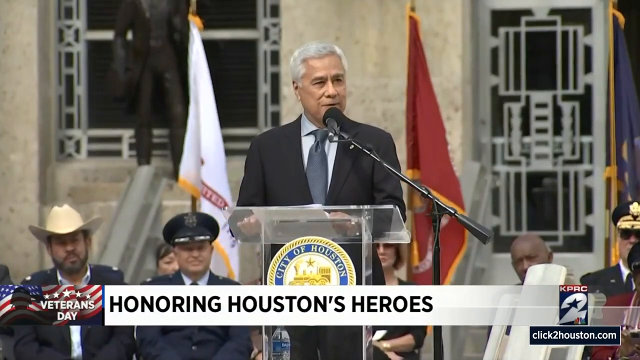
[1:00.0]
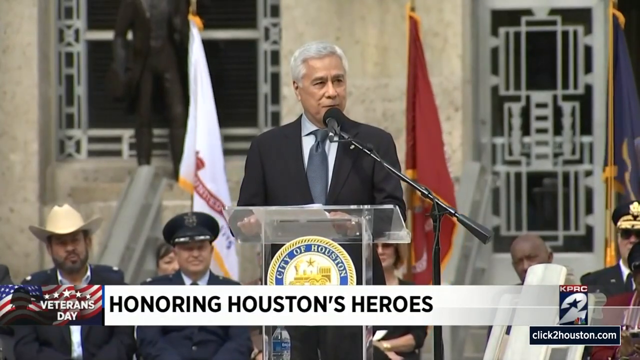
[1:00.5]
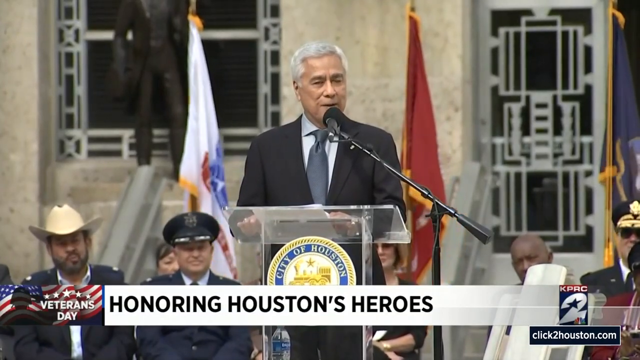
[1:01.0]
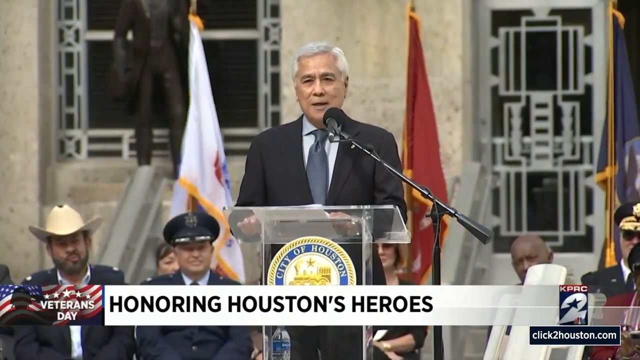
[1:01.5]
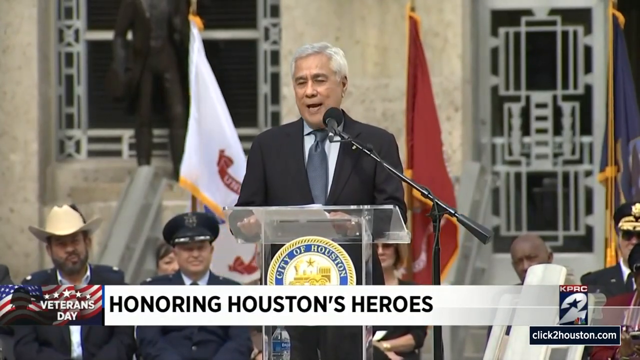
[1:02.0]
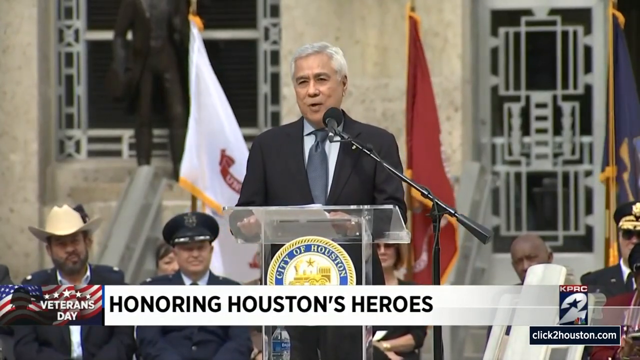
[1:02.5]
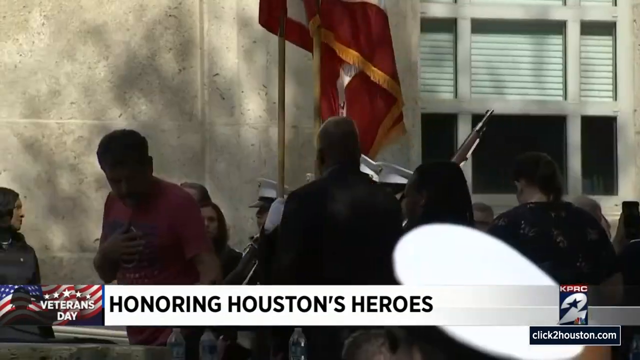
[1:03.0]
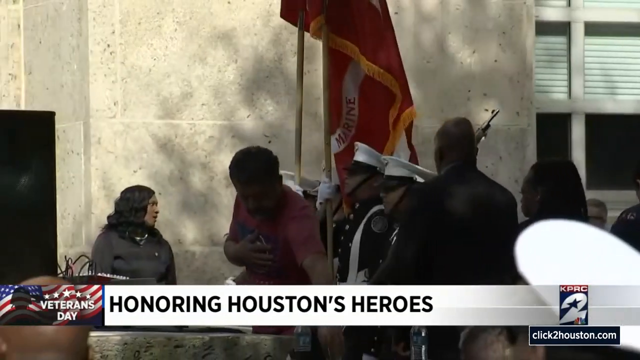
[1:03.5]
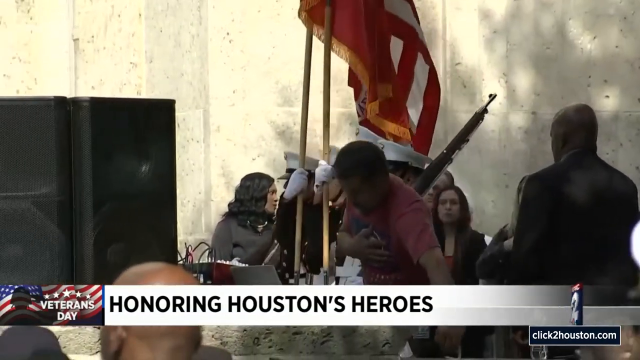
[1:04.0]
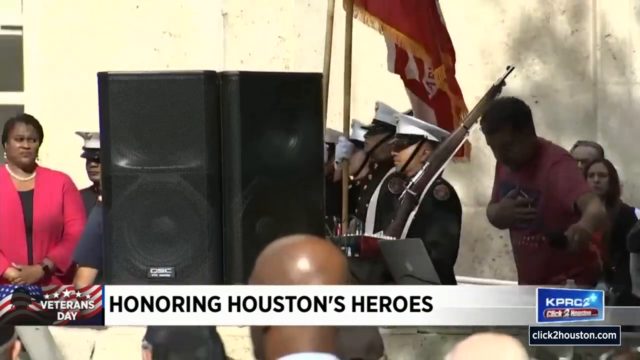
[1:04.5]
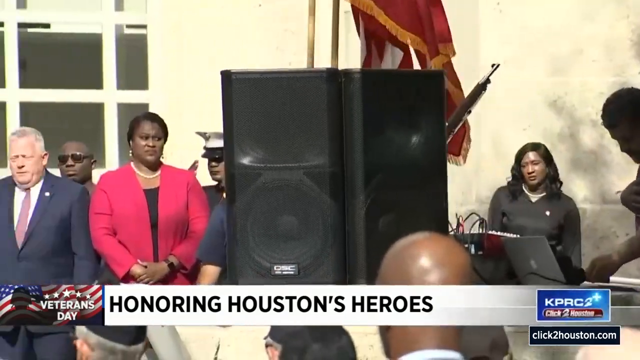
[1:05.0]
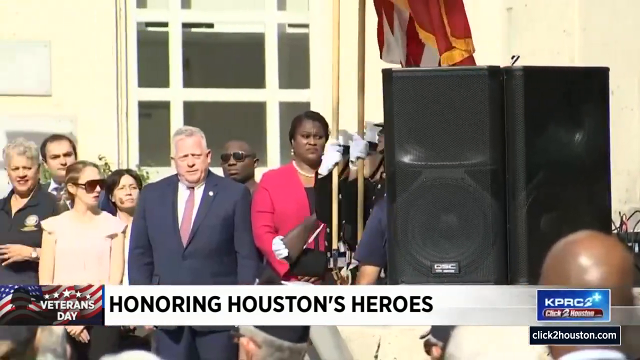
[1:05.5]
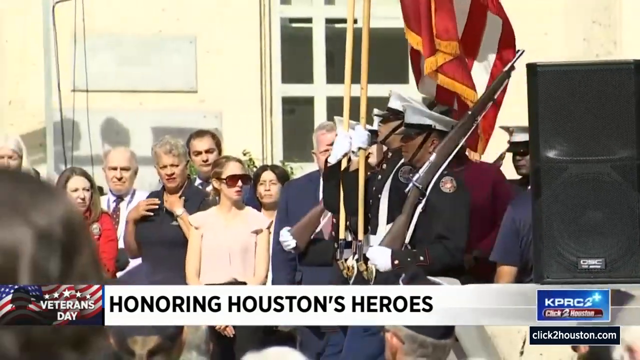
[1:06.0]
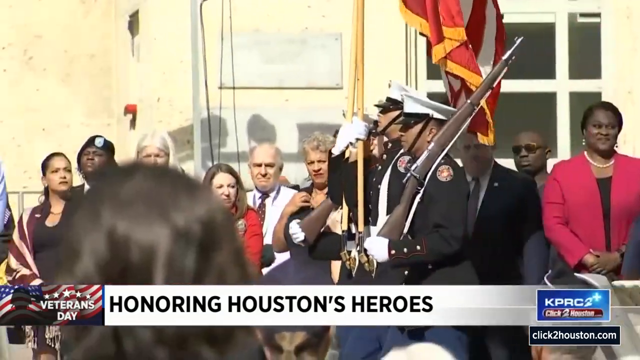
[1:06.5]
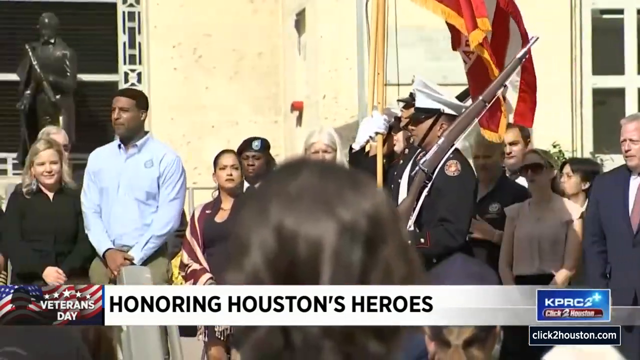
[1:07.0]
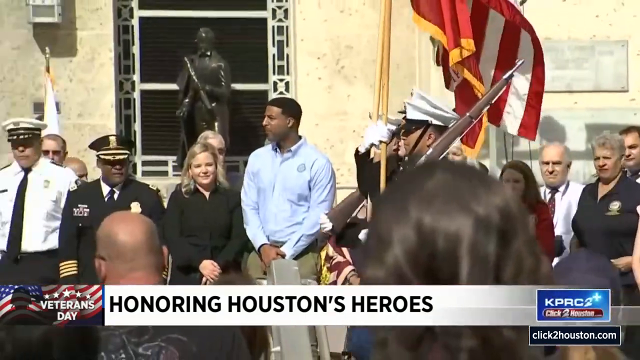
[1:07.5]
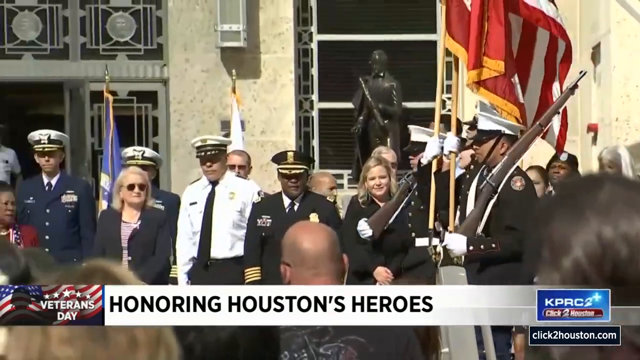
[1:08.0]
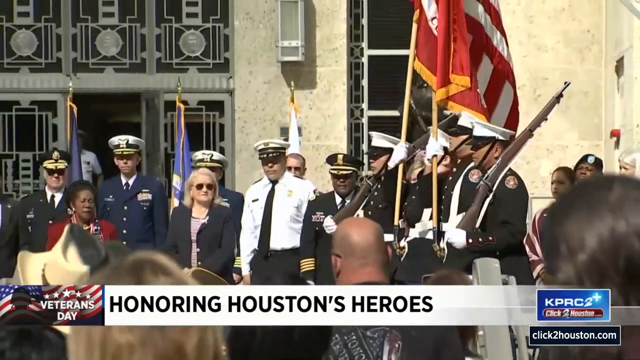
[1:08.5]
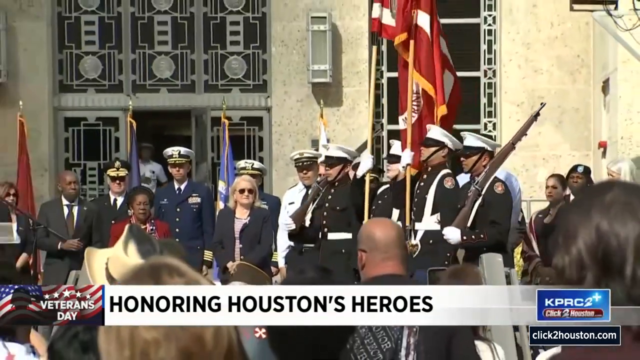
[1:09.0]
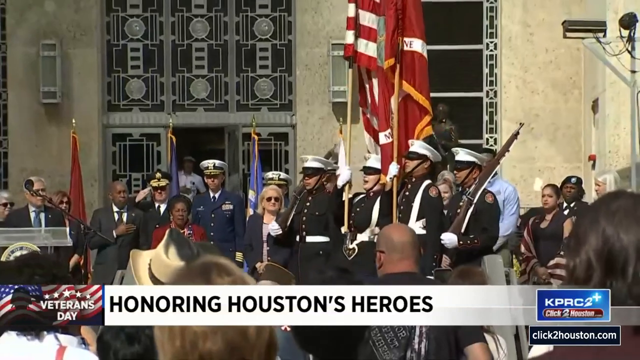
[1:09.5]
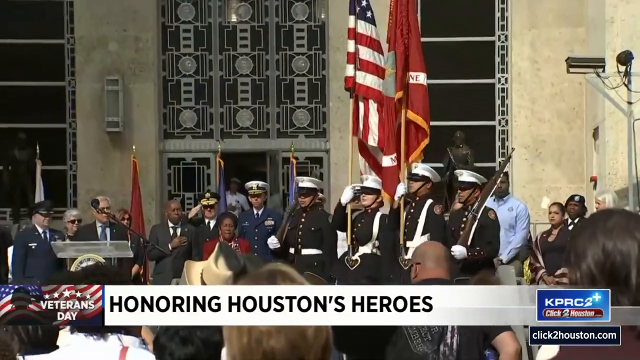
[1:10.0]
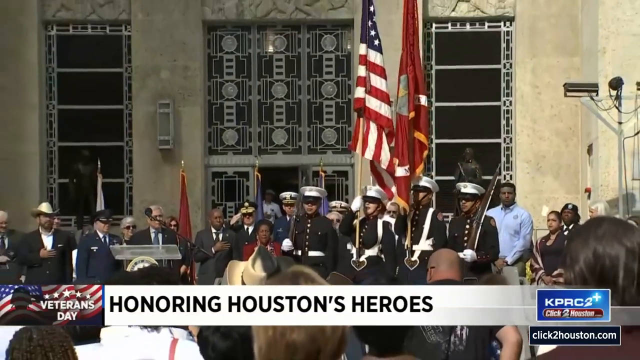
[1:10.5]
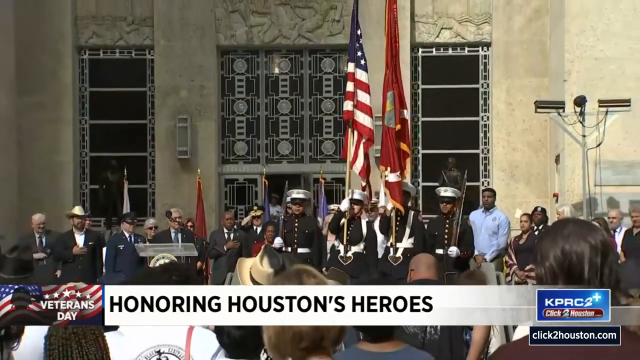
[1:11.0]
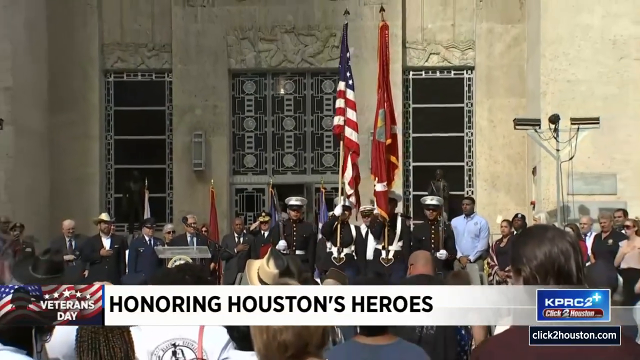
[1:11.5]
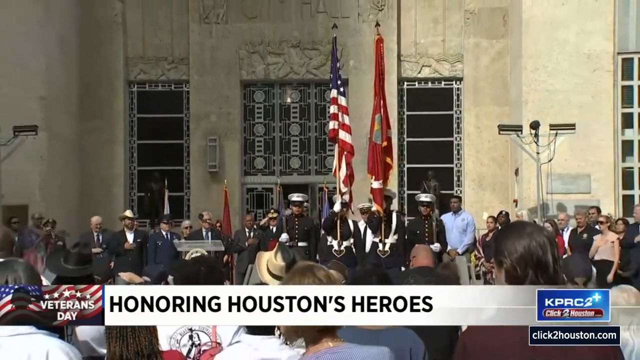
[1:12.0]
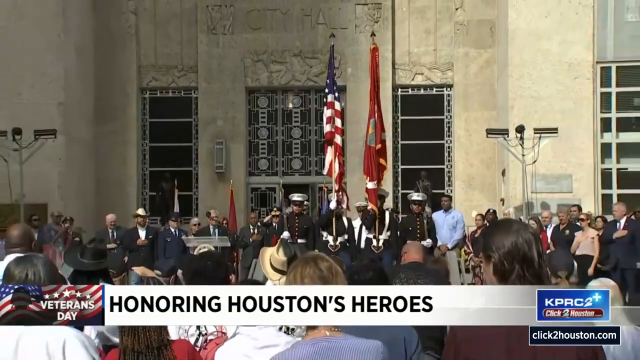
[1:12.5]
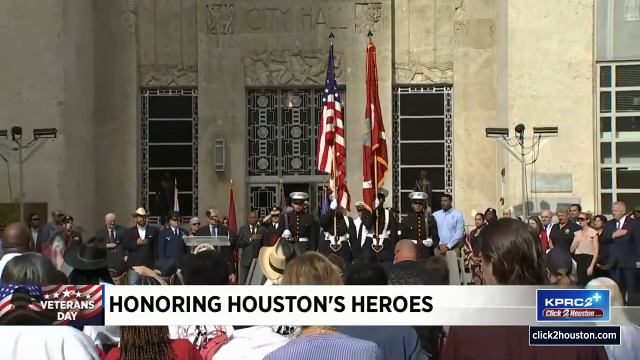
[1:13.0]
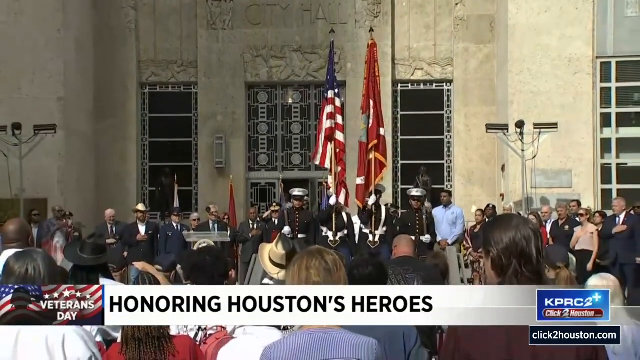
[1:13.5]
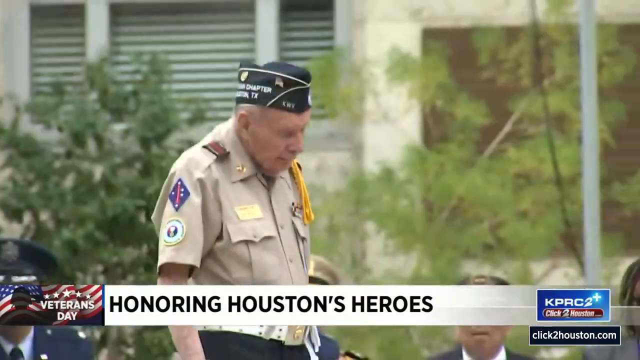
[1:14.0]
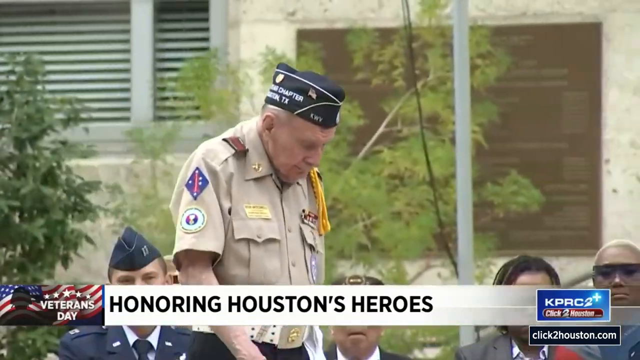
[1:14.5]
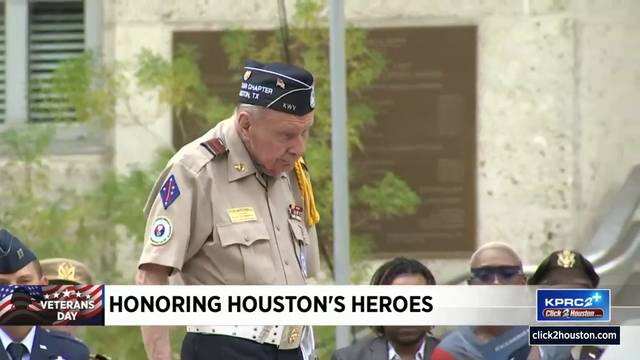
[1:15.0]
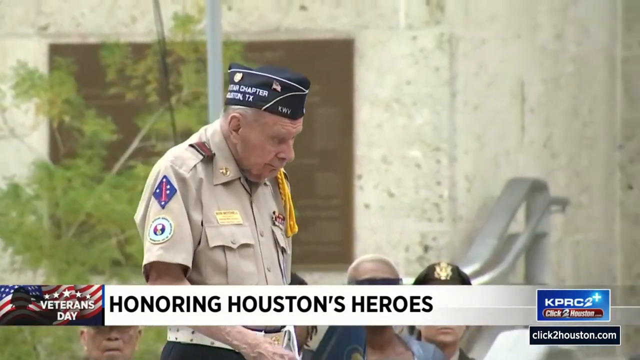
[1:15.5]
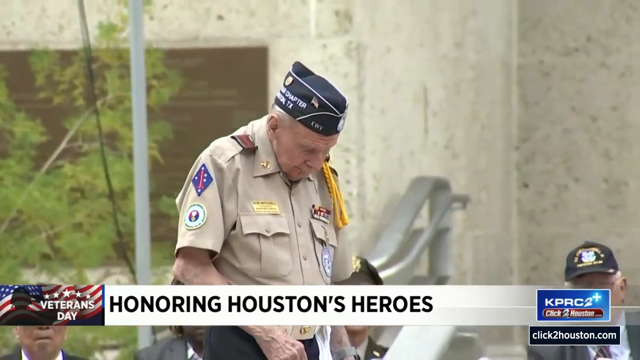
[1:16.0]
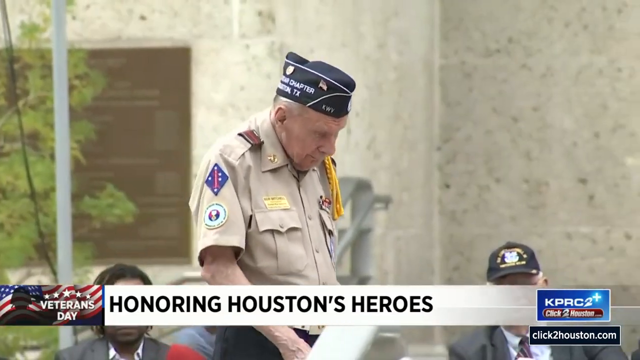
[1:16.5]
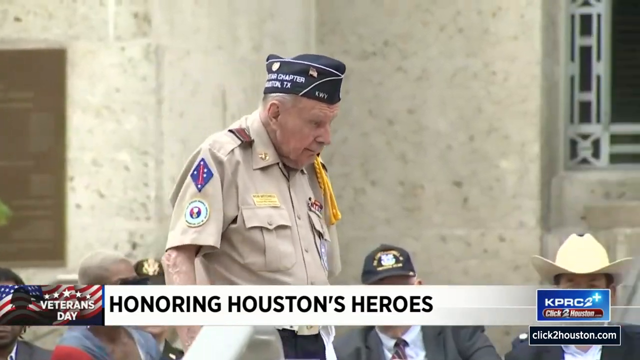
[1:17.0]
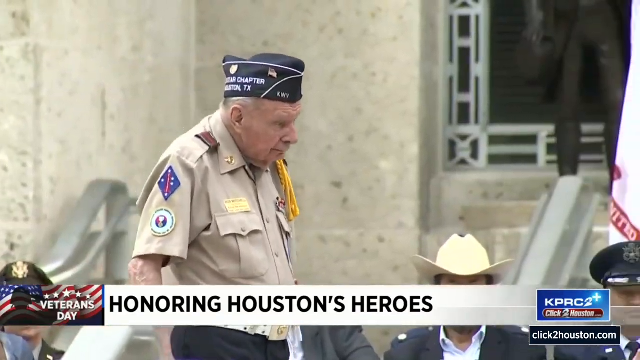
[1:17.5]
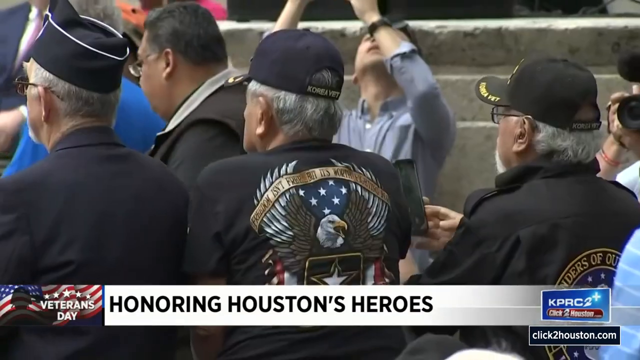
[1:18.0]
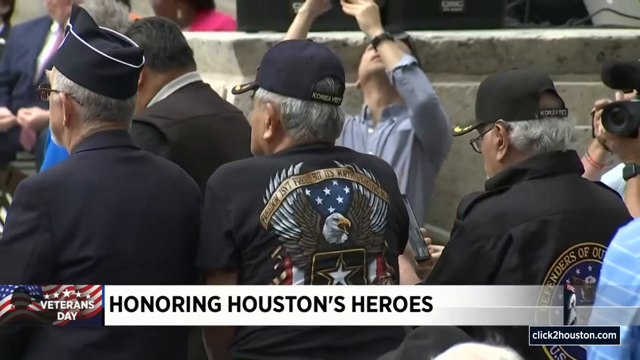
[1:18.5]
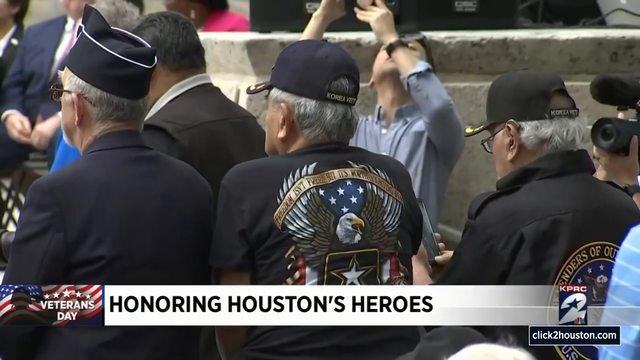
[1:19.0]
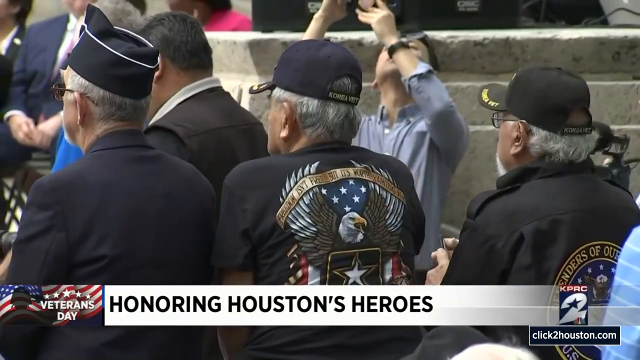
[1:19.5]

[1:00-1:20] The video returns to the stage presentation. Off to the side, people in military dress hold flags, including a state flag and a U.S. flag, while other people walk toward the back of the area. Four people in military dress, two with flags and two with ceremonial guns, march to the front of the stage; they appear to be singing as they march and continue singing after they stop. An older man who appears to be a veteran, looking to be in his late 70s or early 80s, with dark gray hair and wearing what looks like a casual or ROTC uniform, walks toward the podium. The camera cuts to the audience, showing members who look similar to him but wear dark black T-shirts with eagles and American flags and hats that say "Korea Vet" in the style of a military service hat. Other people in the crowd wave flags and clap. Interspersed are members of the press holding cameras directed at the stage and seated spectators filming the stage from their seats. The older soldier then walks over to the microphone. The screen continues to read "honoring Houston's heroes," with the Veterans Day logo on the left-hand side.